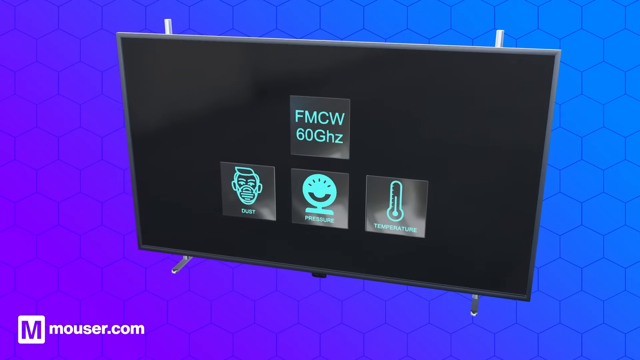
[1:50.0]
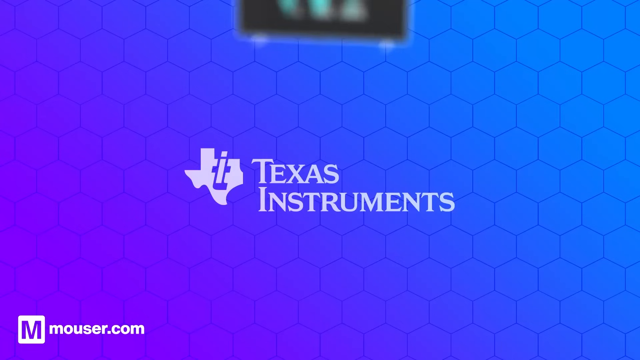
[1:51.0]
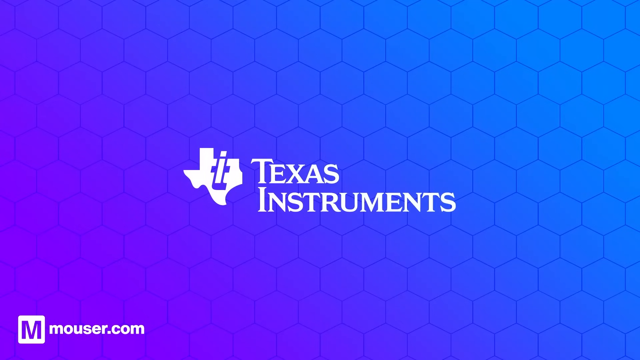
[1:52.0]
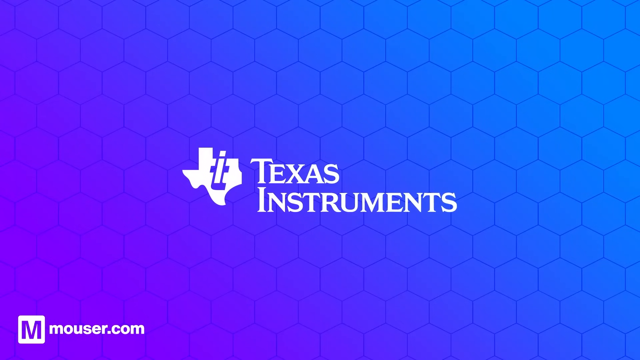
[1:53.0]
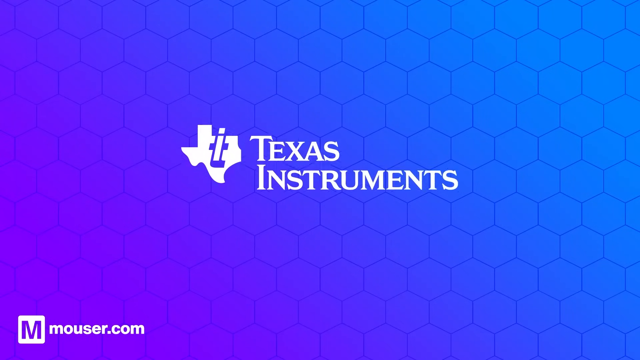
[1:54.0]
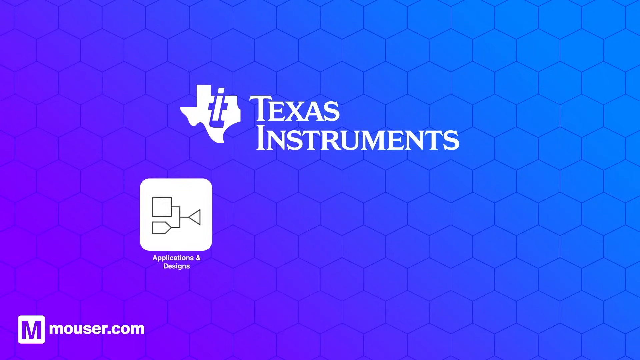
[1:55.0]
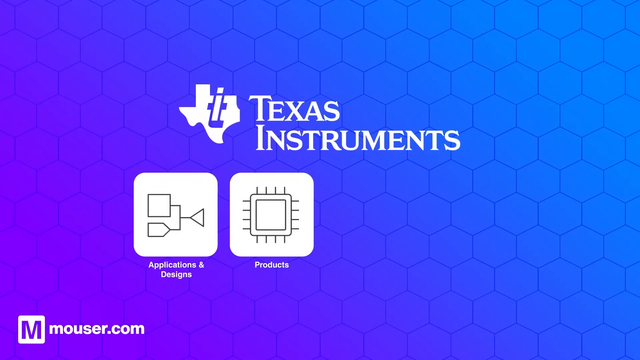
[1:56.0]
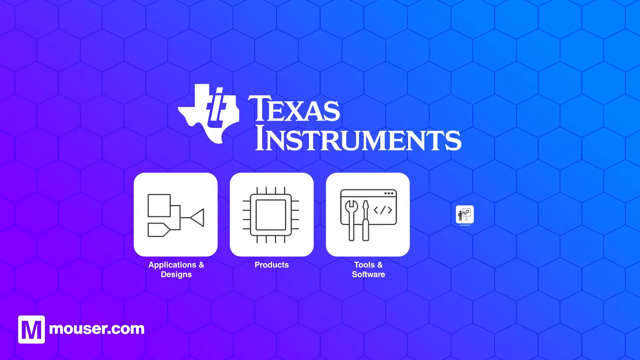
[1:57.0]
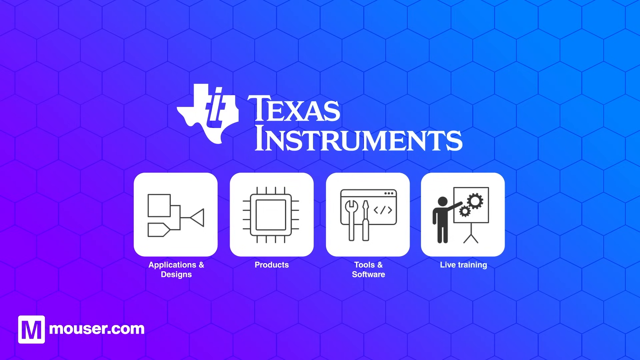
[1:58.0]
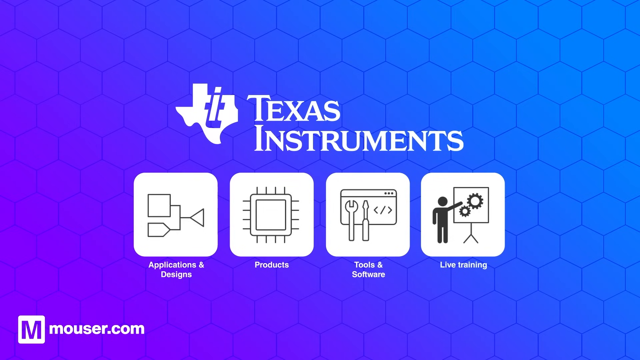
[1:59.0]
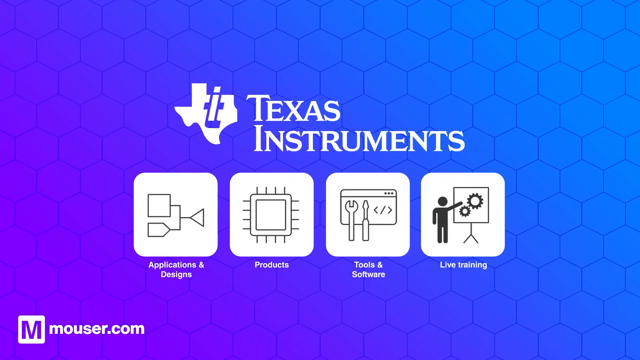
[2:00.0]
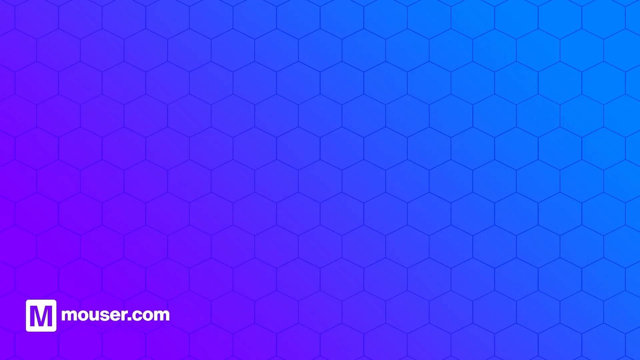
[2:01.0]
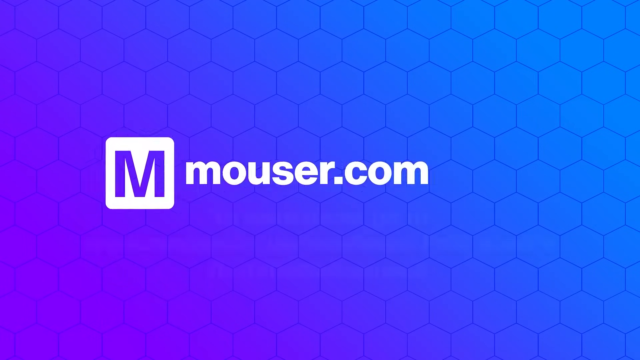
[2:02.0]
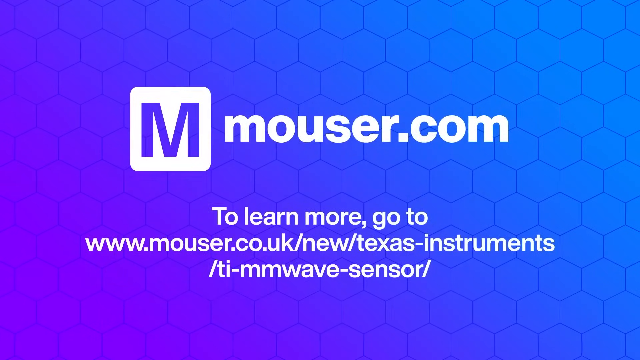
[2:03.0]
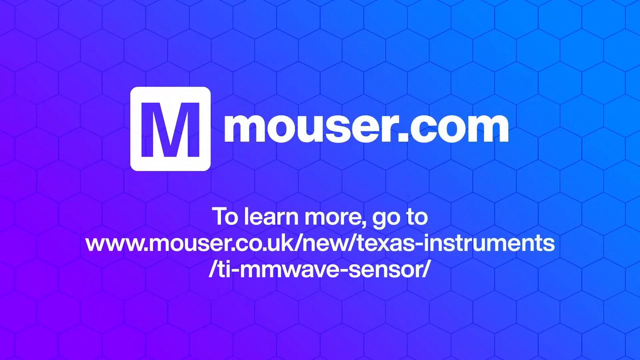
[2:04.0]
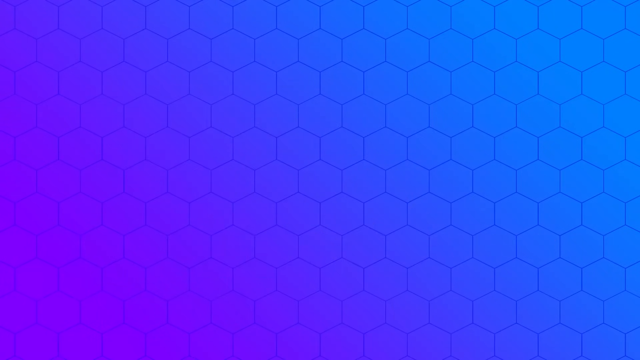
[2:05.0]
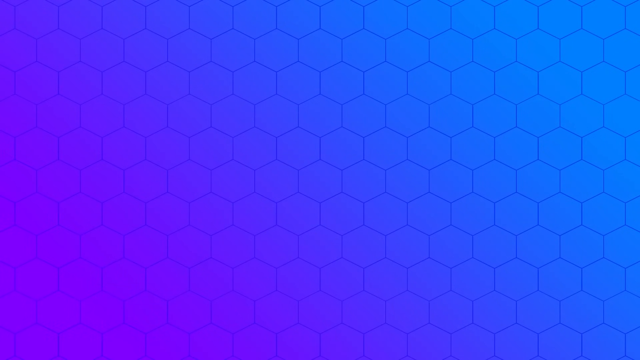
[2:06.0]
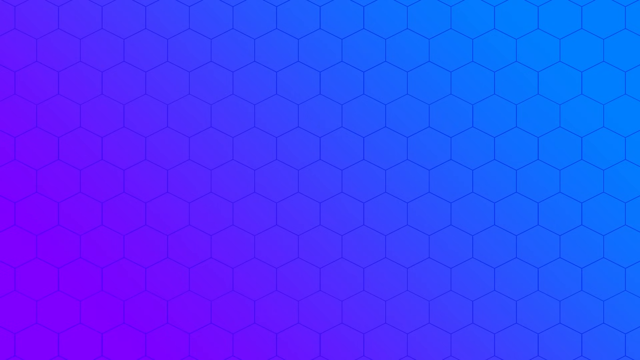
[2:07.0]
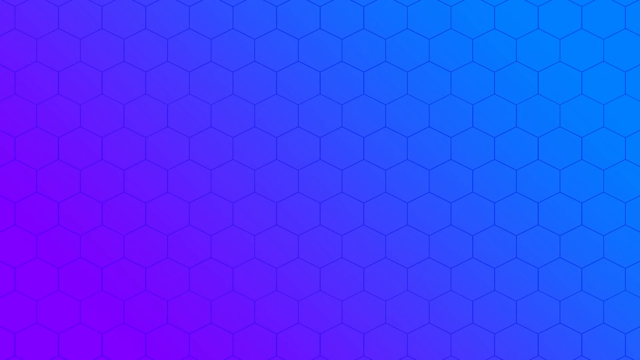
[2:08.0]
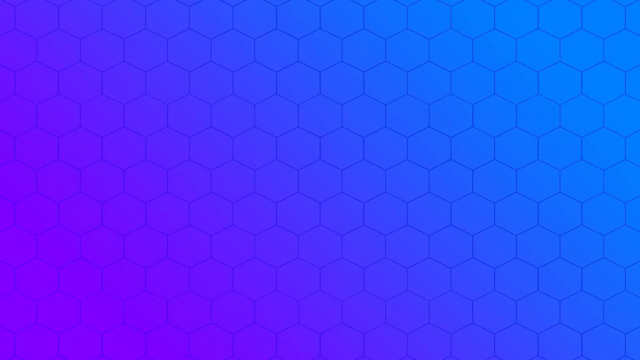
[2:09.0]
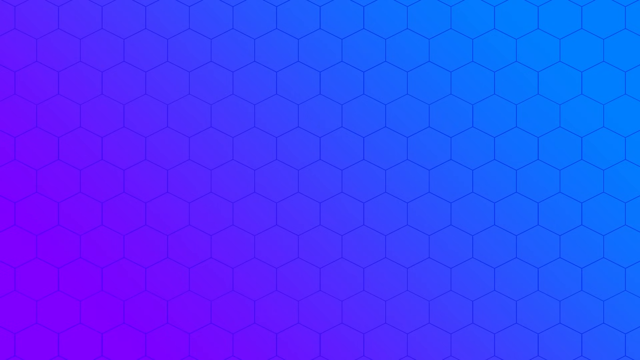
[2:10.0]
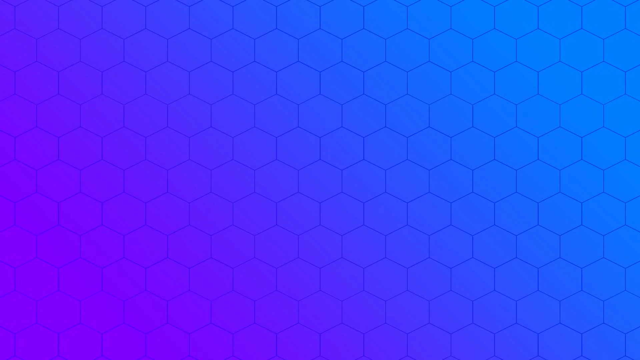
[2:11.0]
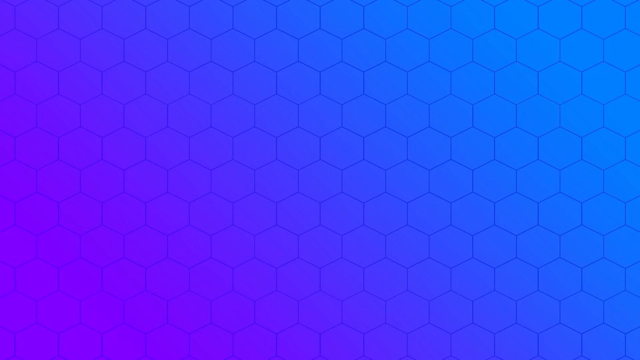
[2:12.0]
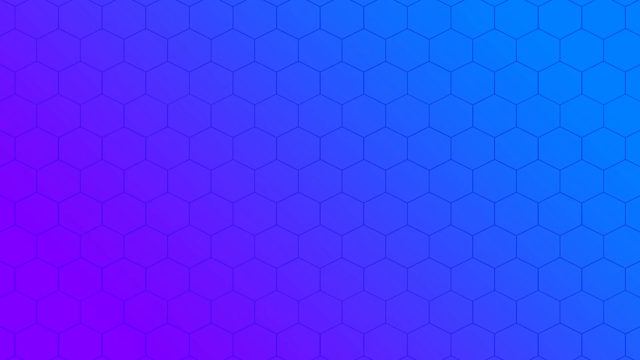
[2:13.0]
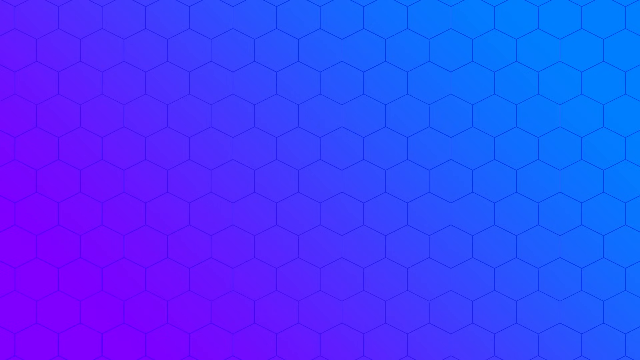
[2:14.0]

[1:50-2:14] A plain blue screen with a barely visible honeycomb-like pattern shows a large computer-generated TV monitor in the middle. Its screen is black, with "FMCW" in teal-green letters, "60 gigahertz" below that, and three icons below this, all drawn in the same neon colors. After several seconds, the monitor fades away, leaving a plain blue screen with the words "Texas Instruments" in white capital letters in the middle and the Texas Instruments logo just to the left. "Mouser.com" is written in white in the lower left-hand corner. Four pop-ups appear below Texas Instruments: "applications and designs," "products," "tools and software," and "live training." After several more seconds, the Mouser.com logo becomes more prominent and moves to the center of the screen, with a pointer to a webpage for more information below it. The video ends on the plain blue screen.